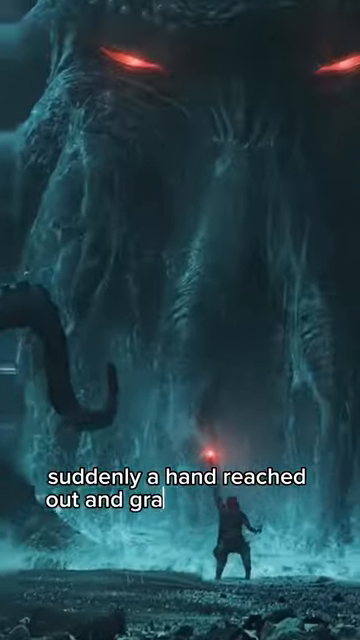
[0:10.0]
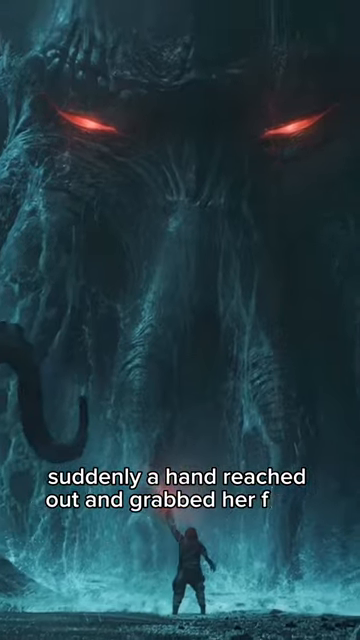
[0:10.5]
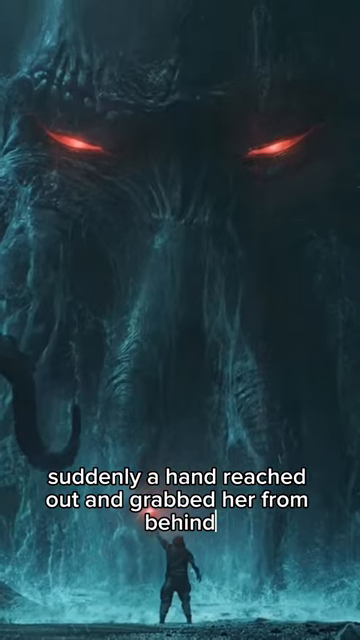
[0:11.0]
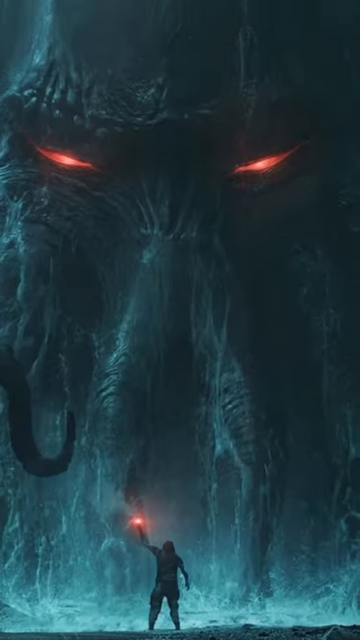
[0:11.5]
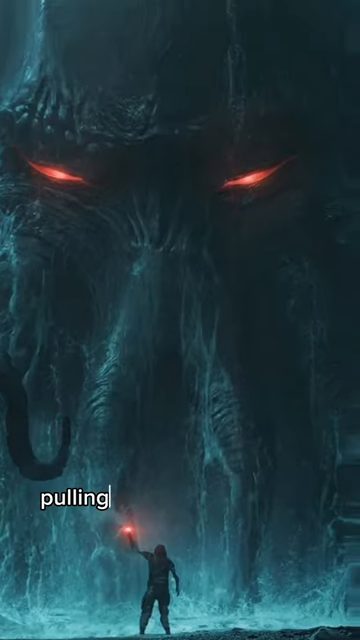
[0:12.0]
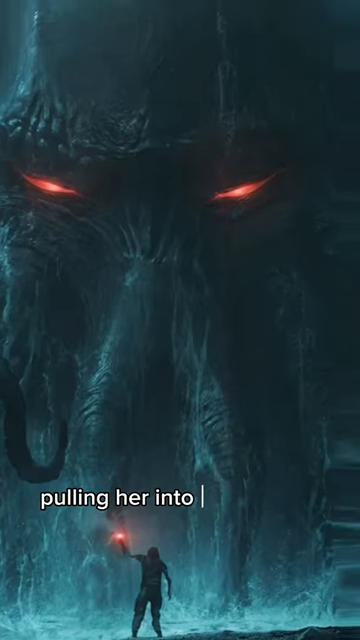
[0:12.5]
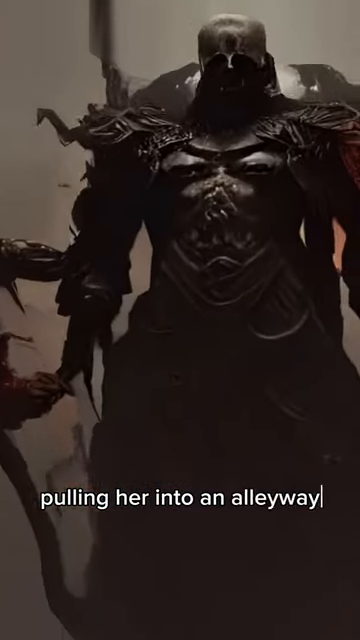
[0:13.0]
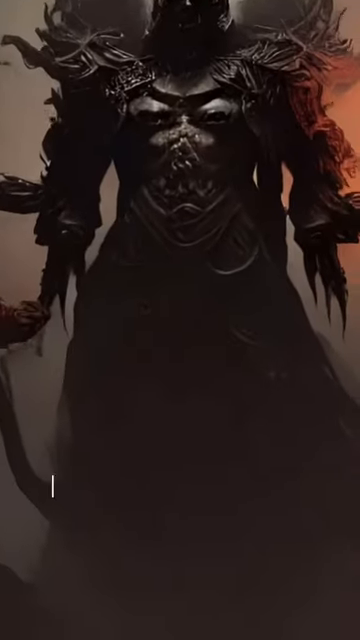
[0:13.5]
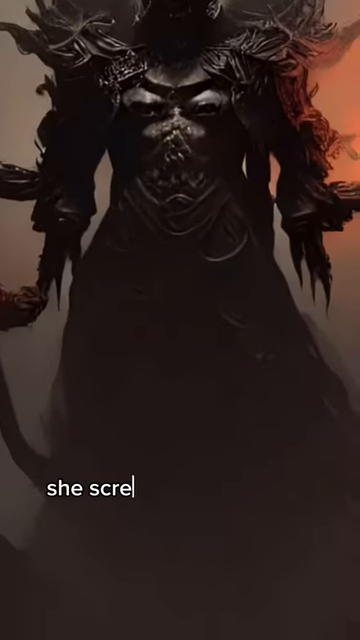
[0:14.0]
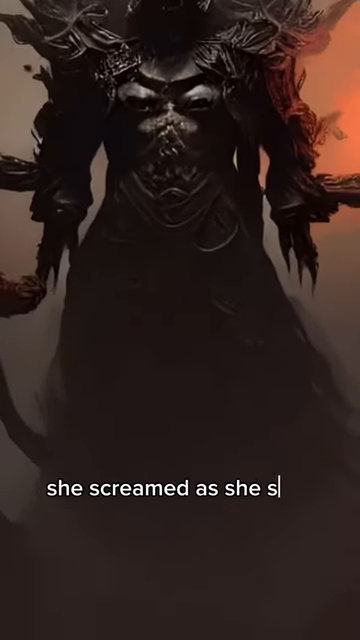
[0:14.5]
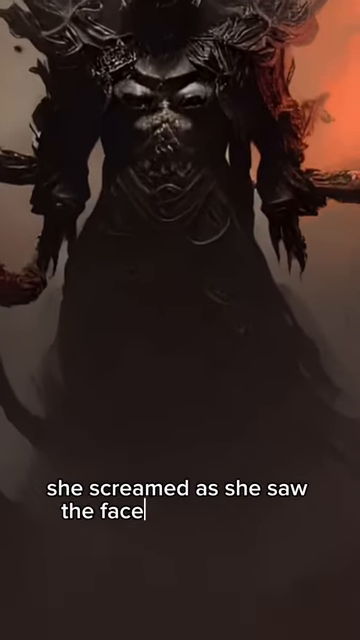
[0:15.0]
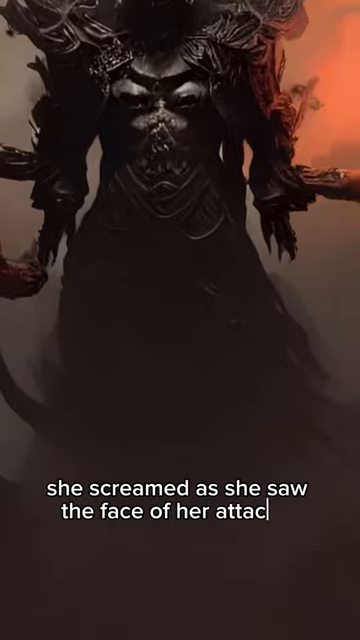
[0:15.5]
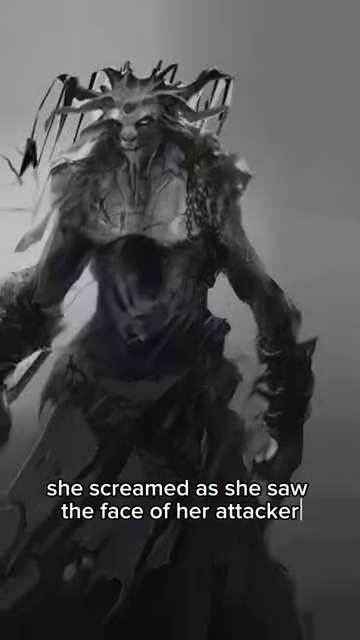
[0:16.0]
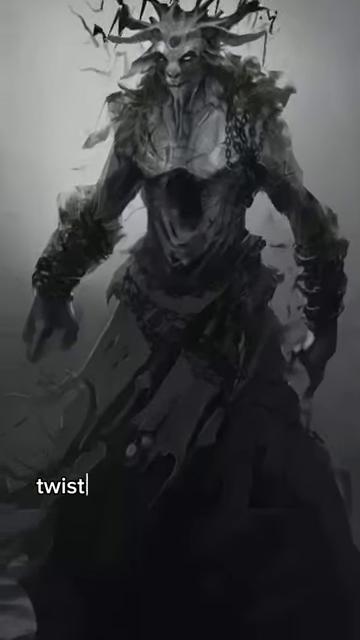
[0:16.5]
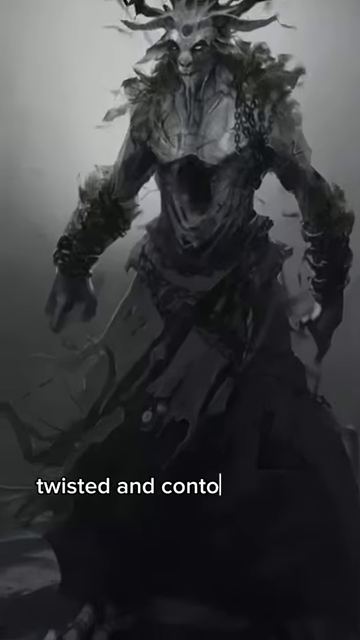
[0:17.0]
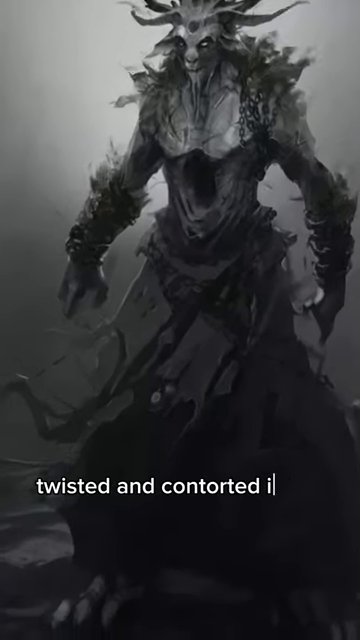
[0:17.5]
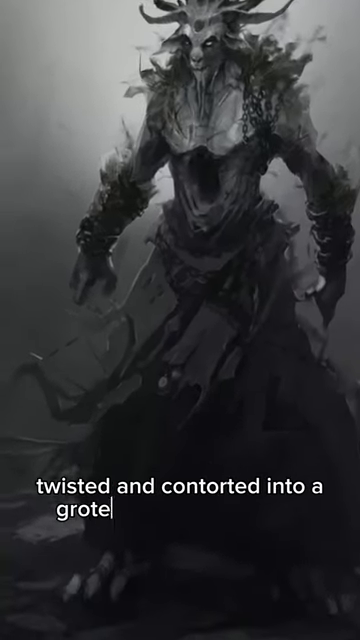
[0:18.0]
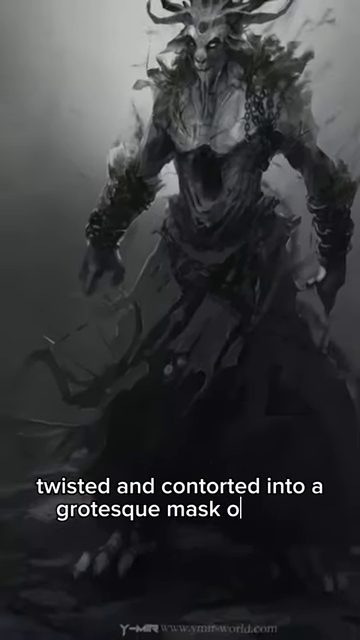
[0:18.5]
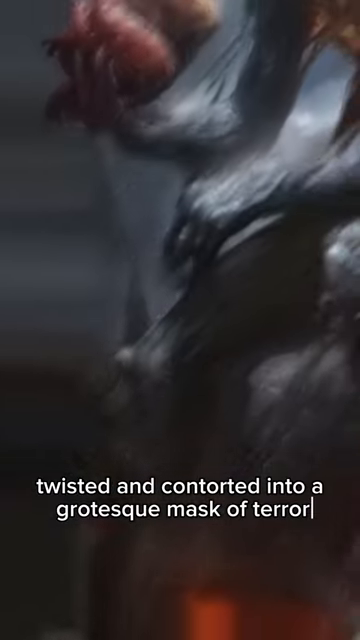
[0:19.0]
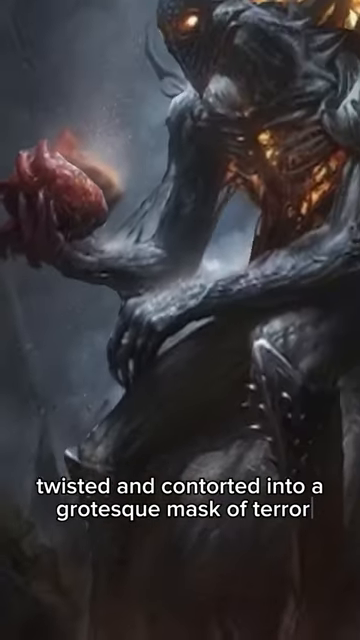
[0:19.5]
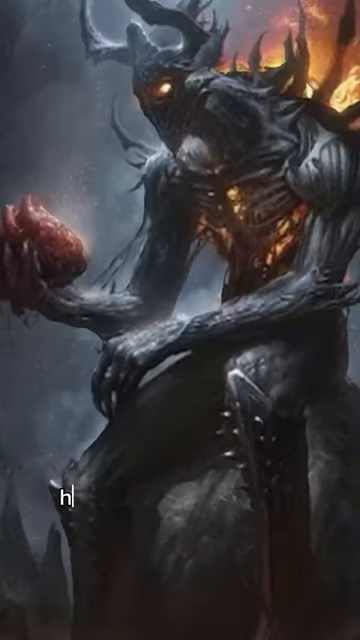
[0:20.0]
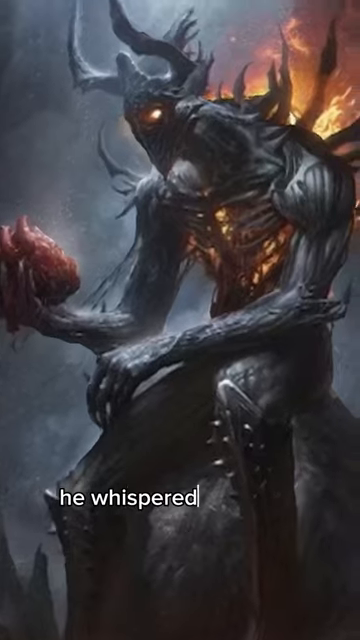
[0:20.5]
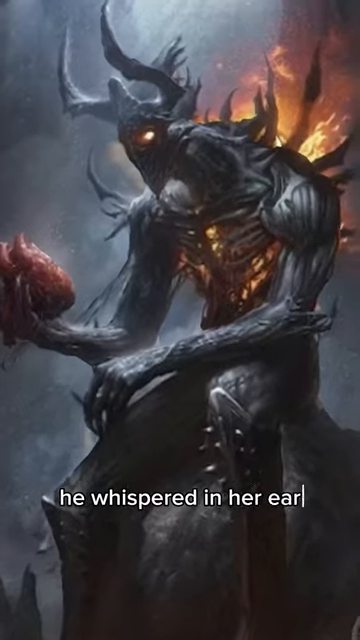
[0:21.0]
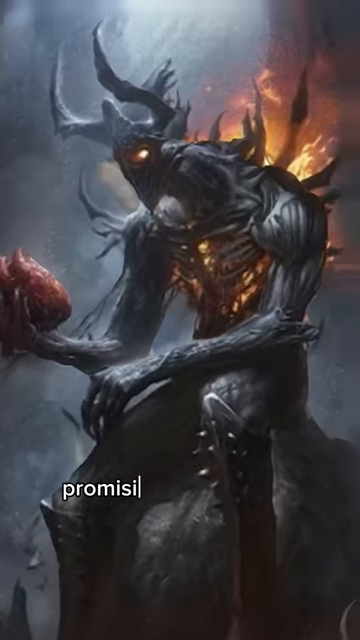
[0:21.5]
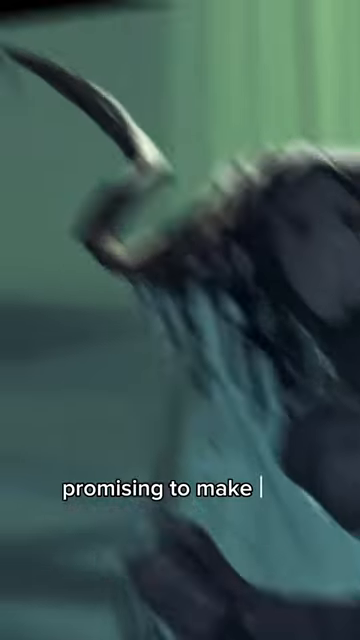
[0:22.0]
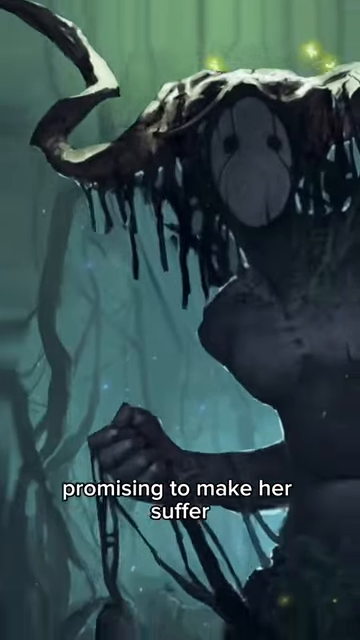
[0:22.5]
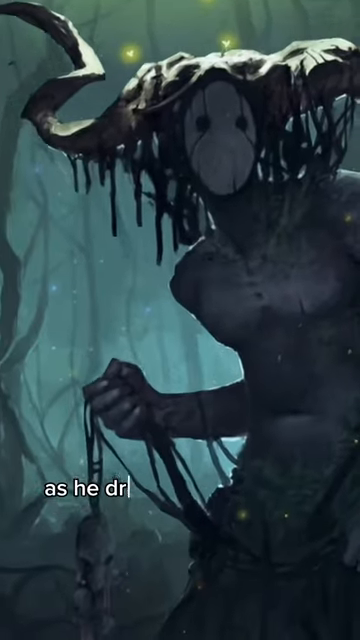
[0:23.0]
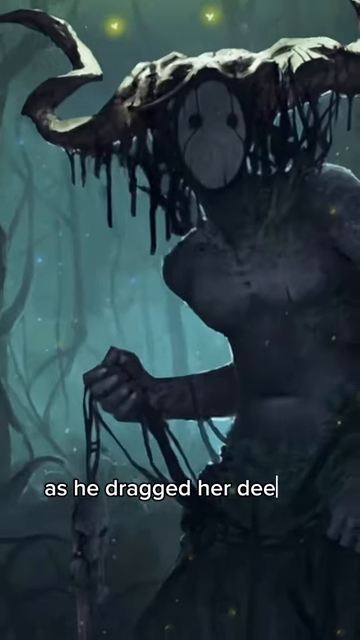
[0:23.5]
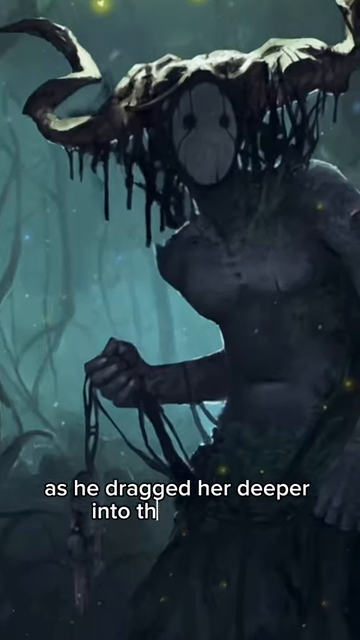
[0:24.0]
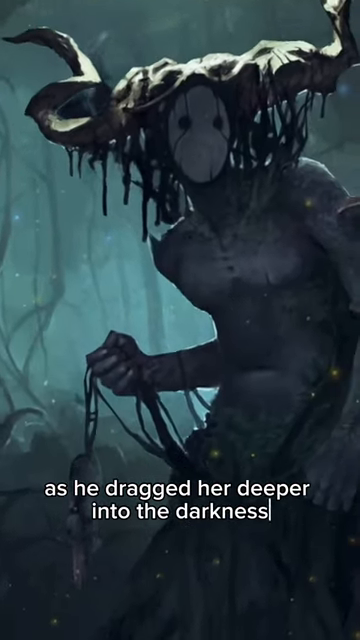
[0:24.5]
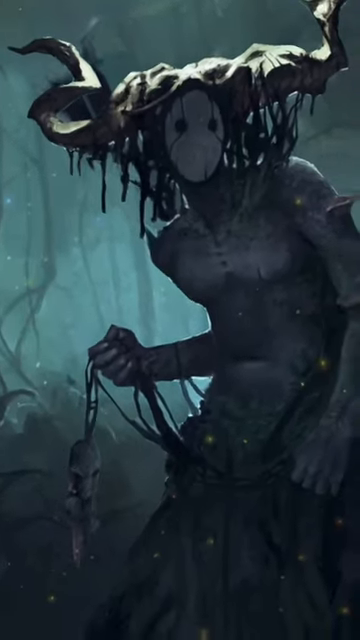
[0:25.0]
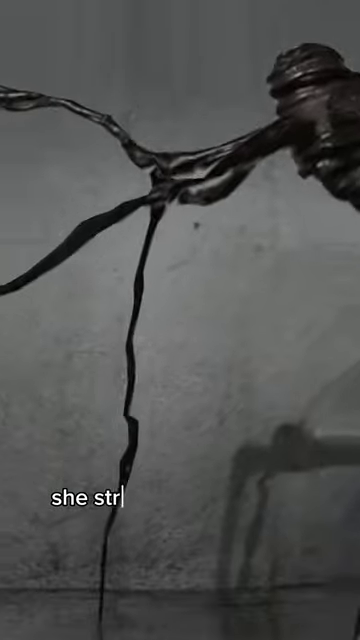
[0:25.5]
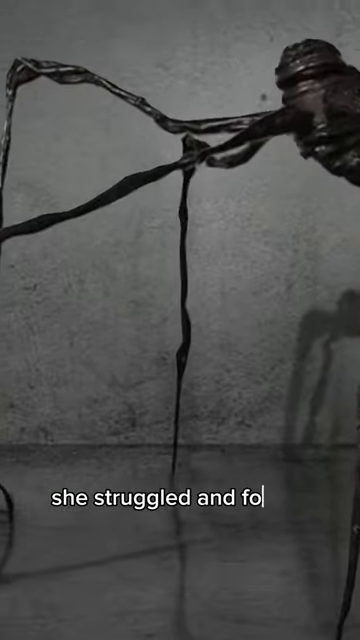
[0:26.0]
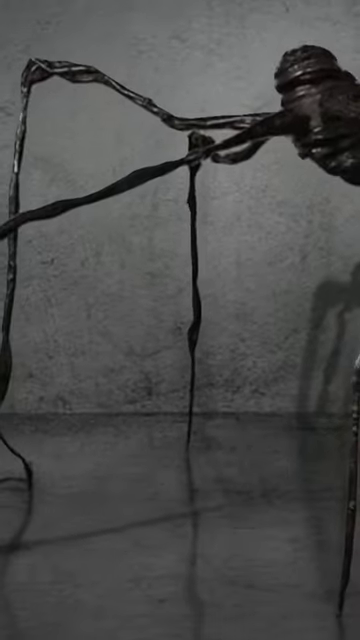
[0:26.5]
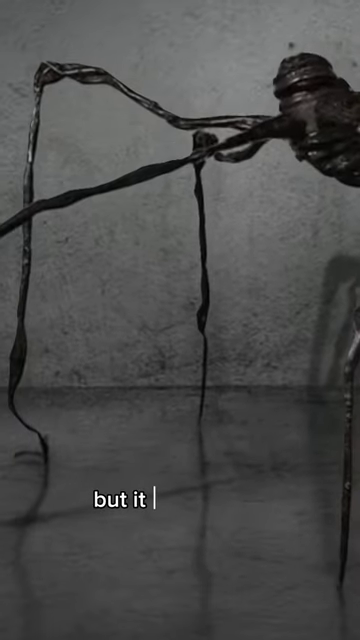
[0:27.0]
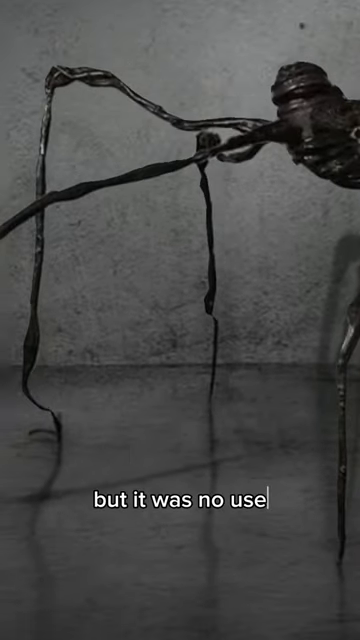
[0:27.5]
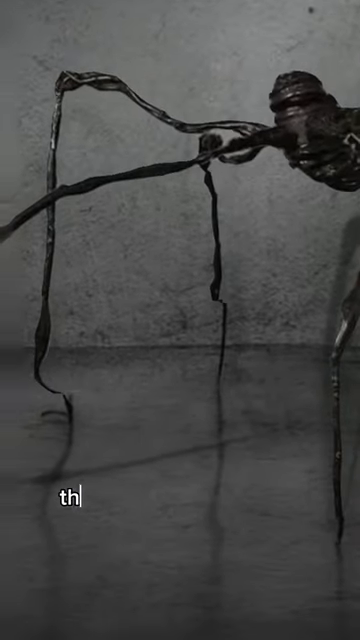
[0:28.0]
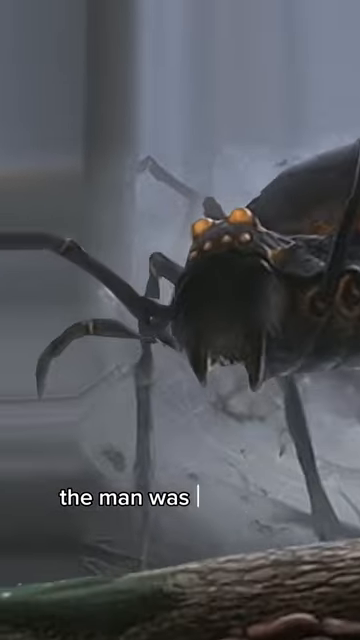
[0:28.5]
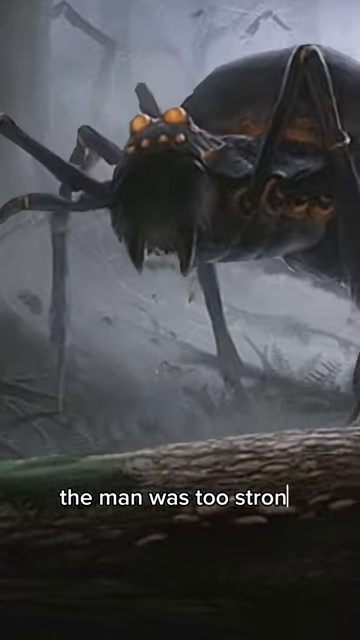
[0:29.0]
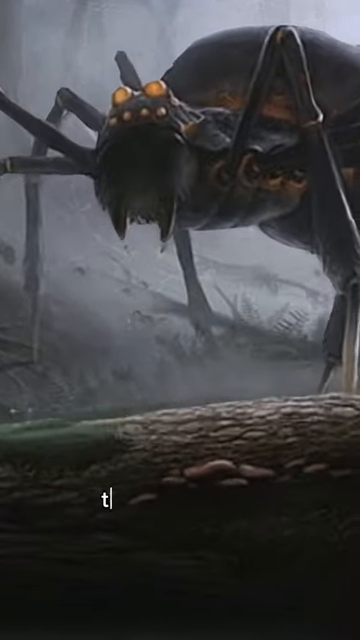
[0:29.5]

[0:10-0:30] A series of different monsters appears, each looking a little different from the first one, seemingly a bunch of random monsters. One looks like a goat, one is kind of like a tree, one looks like an anime character, and there is a spider. One of them is apparently attacking a woman. The pictures have different settings, such as woods, and there is no continuity between them.